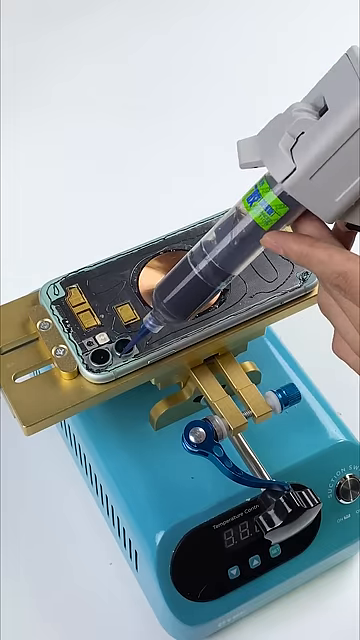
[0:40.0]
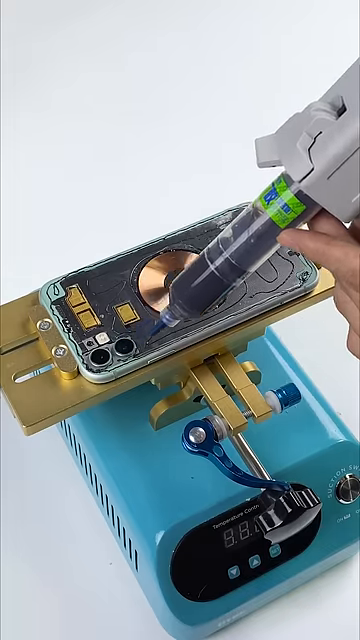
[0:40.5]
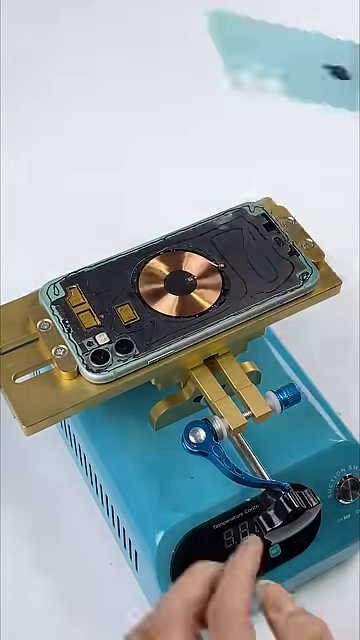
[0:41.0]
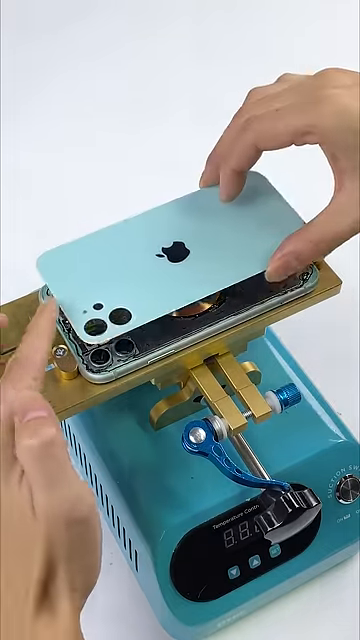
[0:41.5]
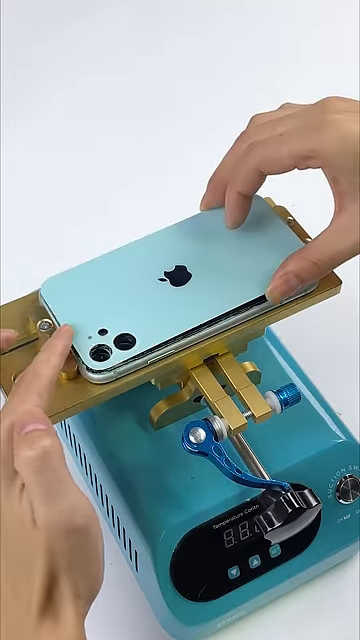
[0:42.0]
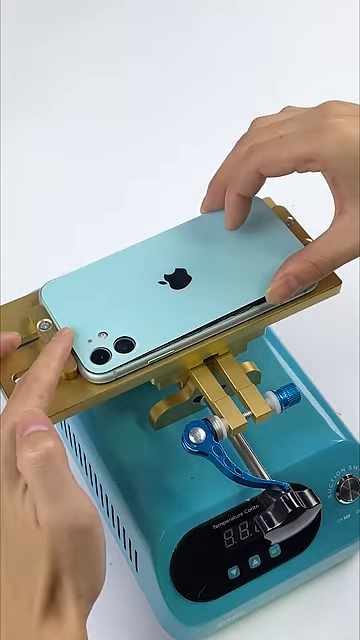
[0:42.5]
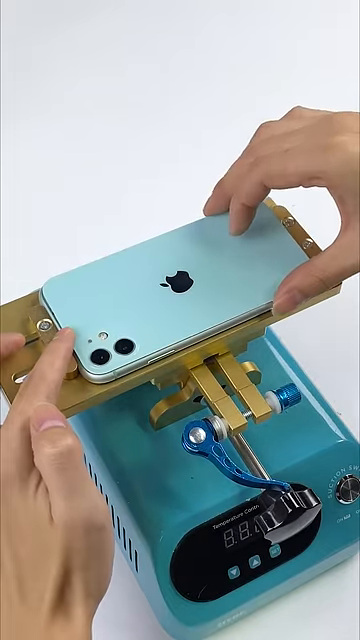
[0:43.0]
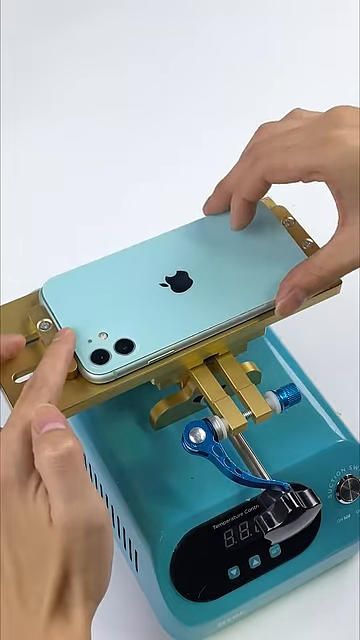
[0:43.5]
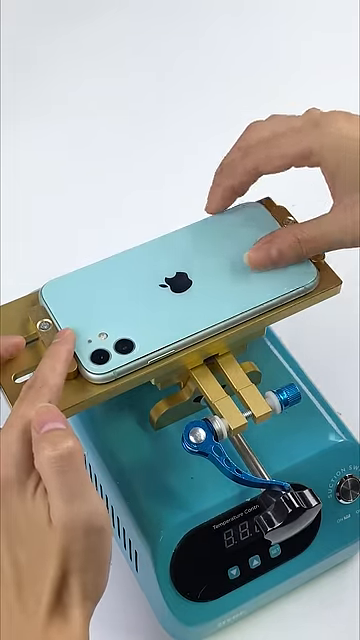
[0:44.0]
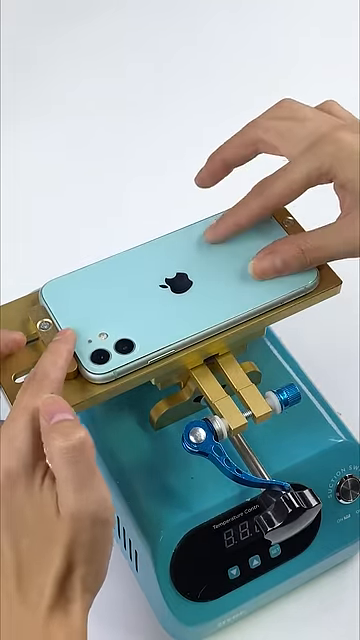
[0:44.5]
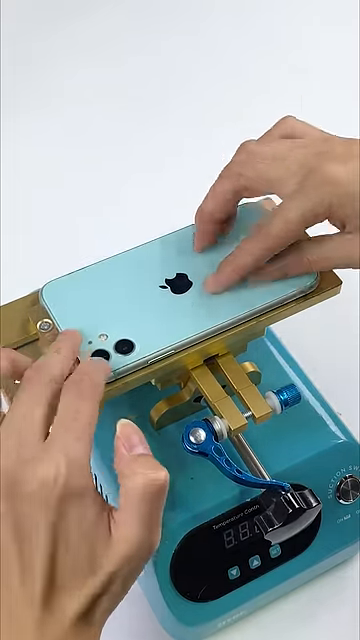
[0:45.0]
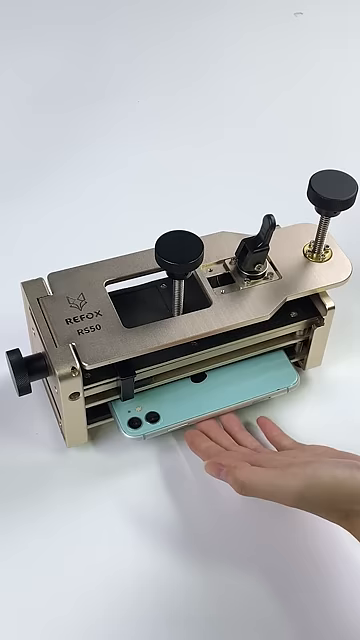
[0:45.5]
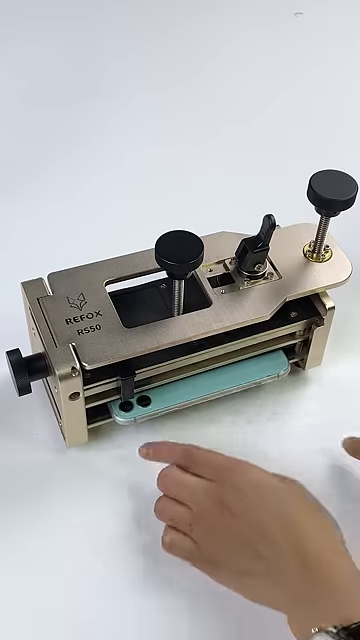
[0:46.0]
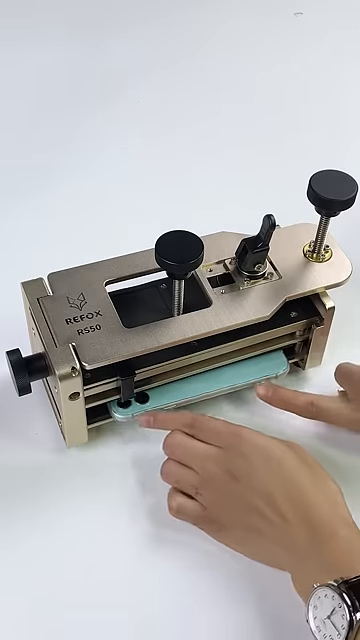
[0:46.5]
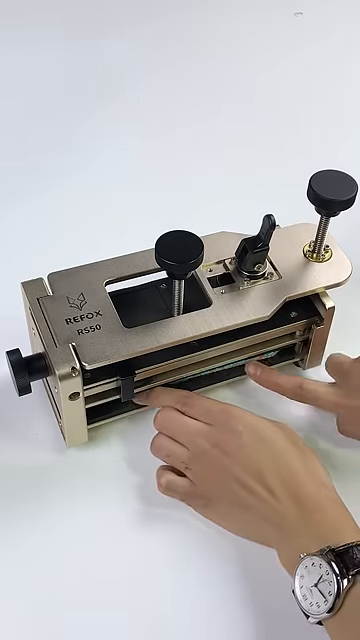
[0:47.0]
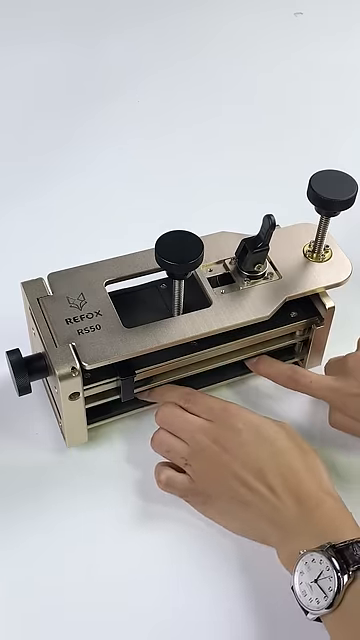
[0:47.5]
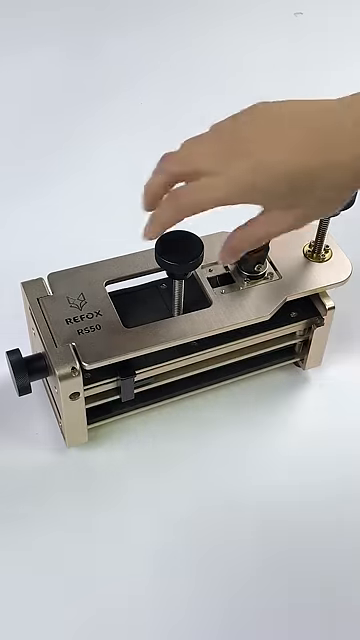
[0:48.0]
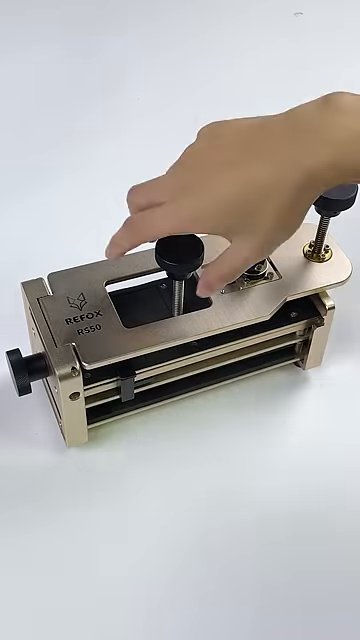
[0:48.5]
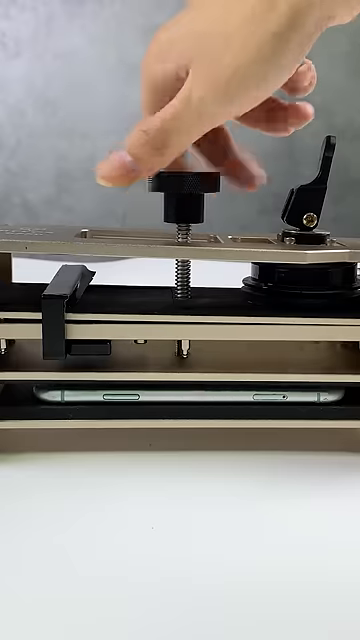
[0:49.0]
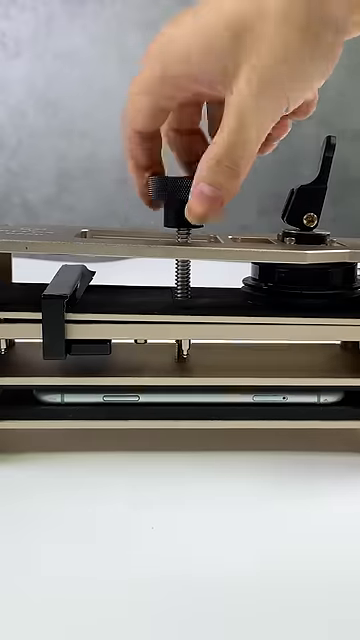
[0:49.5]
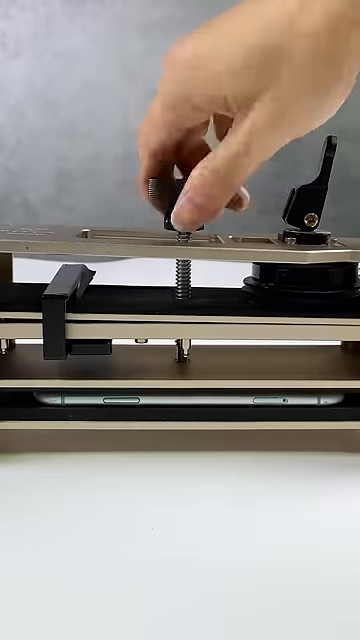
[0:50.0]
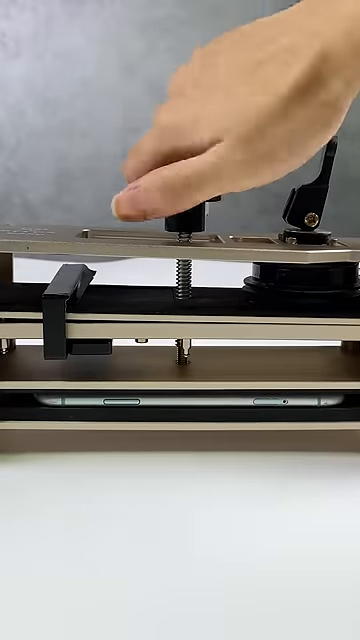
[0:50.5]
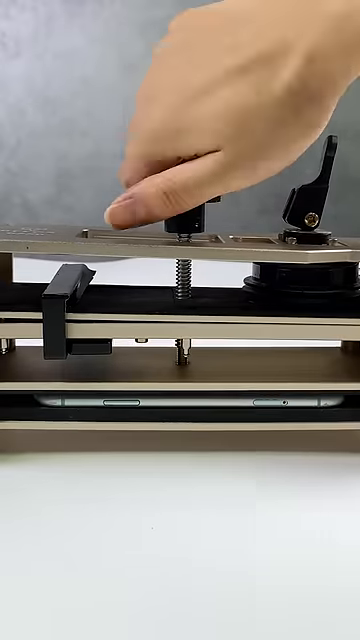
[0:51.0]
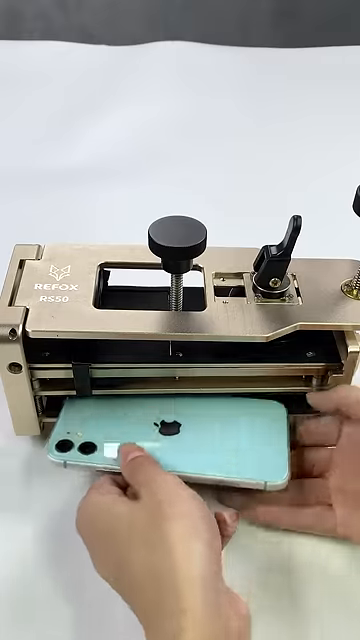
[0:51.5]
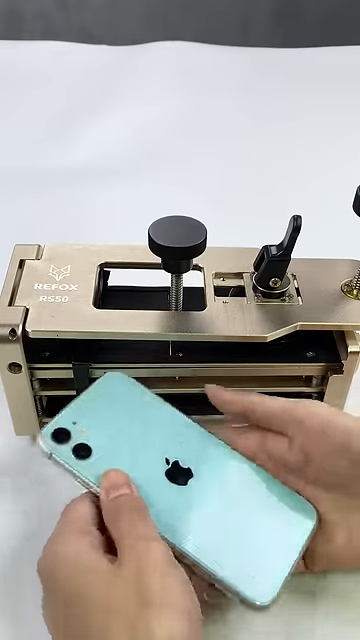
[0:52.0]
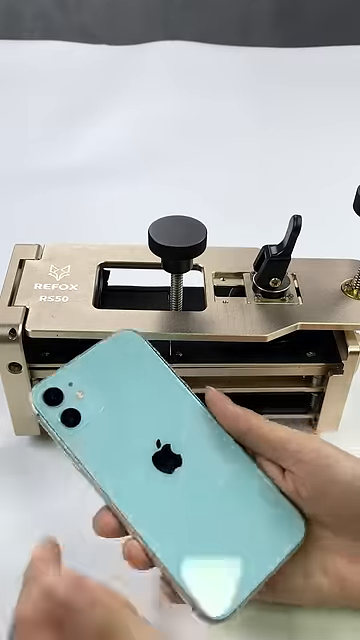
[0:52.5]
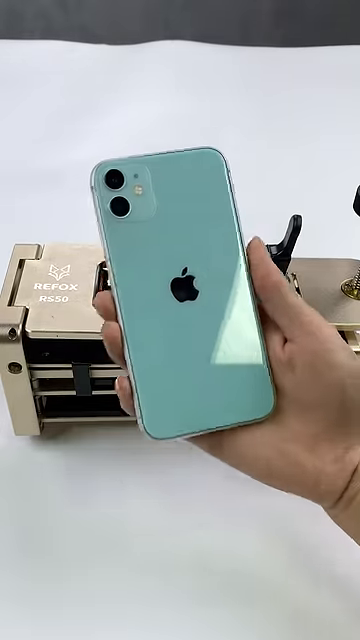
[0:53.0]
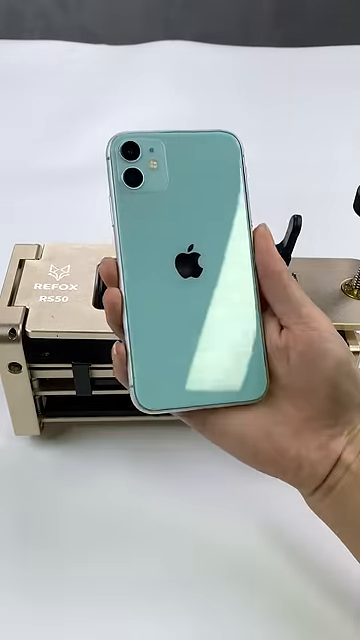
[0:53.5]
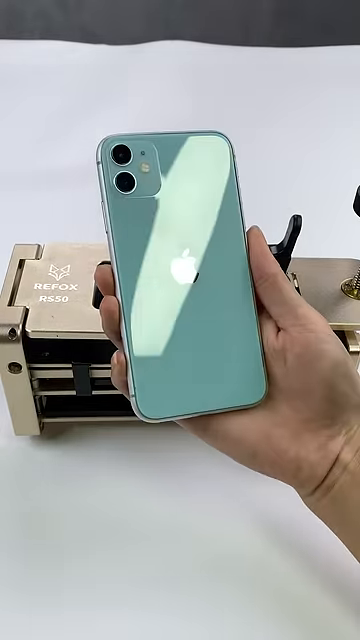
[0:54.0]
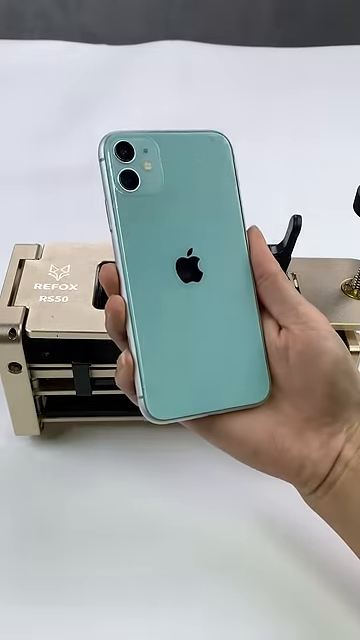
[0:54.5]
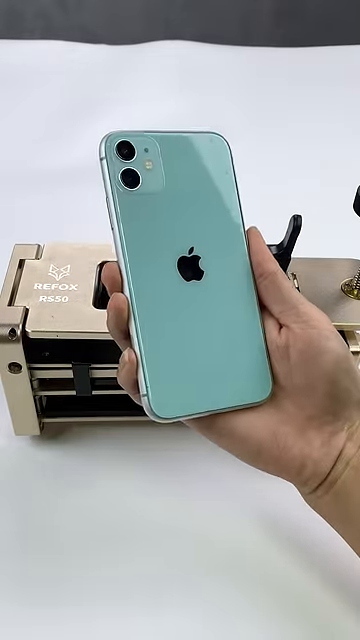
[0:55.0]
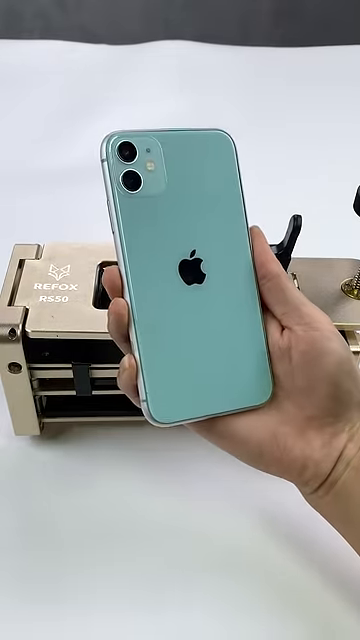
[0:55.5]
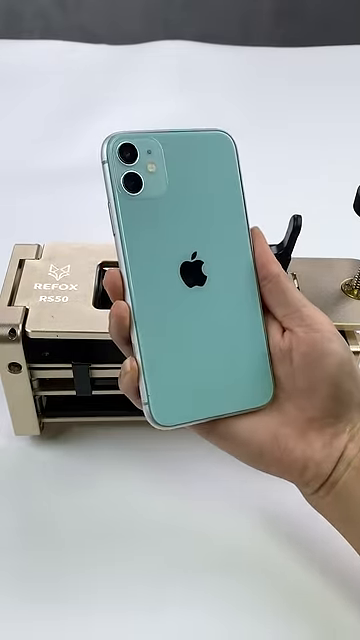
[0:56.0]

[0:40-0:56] A new glass back has been placed on the cleaned iPhone. It looks as though some sort of heavy-duty glue gun is used to affix the back to the phone. The light blue back has been replaced with another light blue back. The phone is then put into a clamp device, presumably to hold the back in place as the glue dries, and the clamp is hand-cranked until it is tight. Finally, the person pulls out an iPhone that looks brand new.